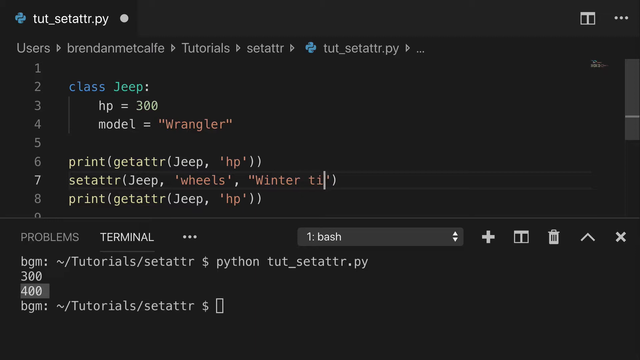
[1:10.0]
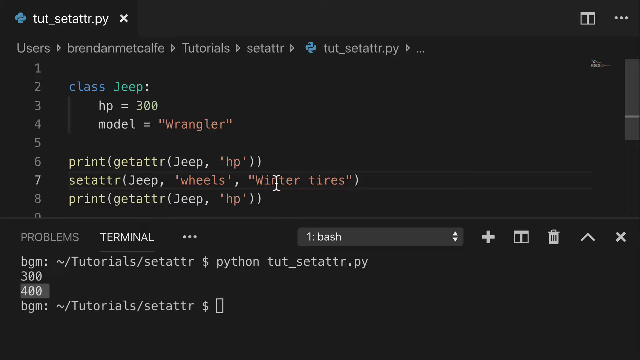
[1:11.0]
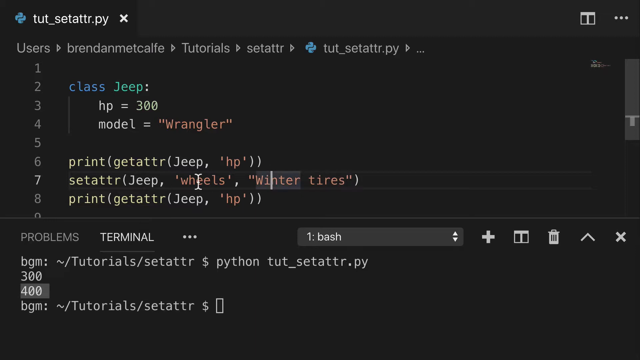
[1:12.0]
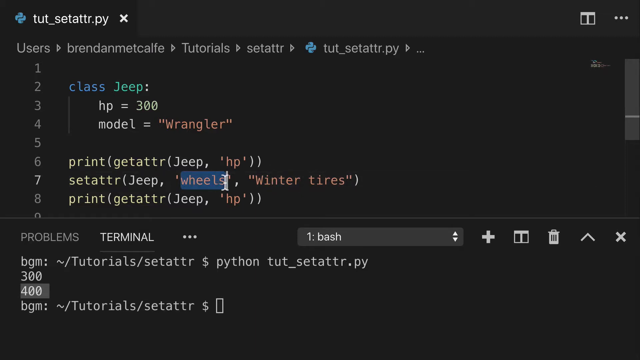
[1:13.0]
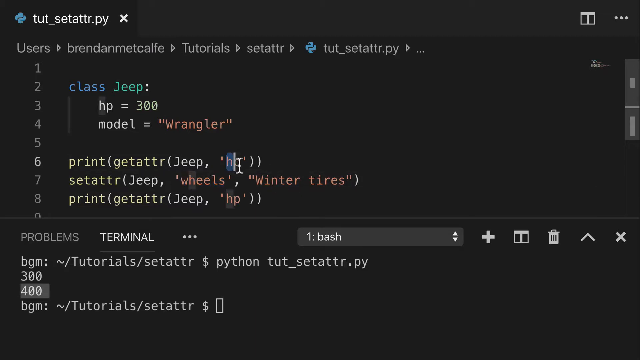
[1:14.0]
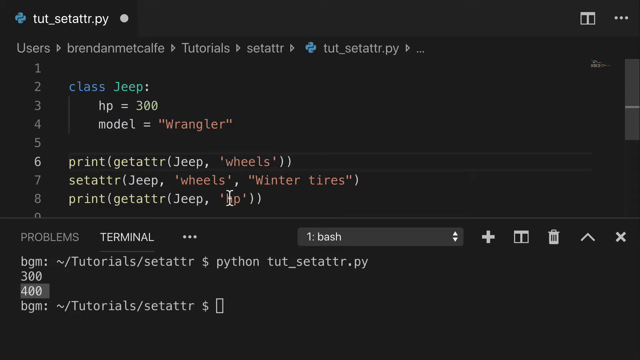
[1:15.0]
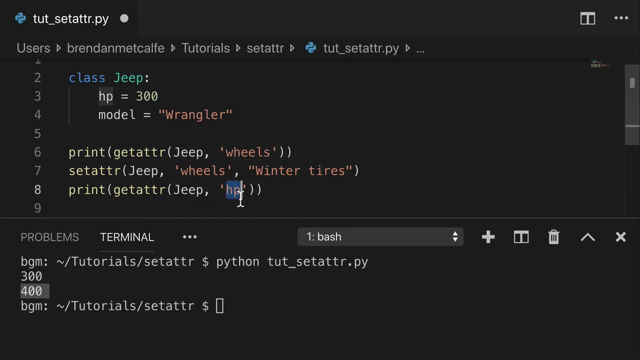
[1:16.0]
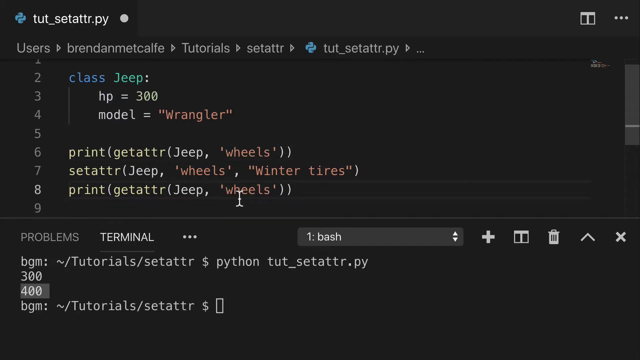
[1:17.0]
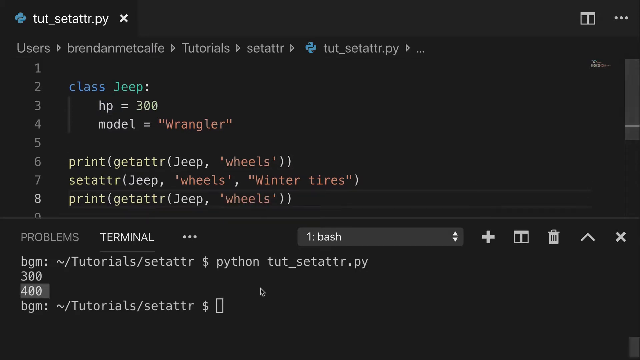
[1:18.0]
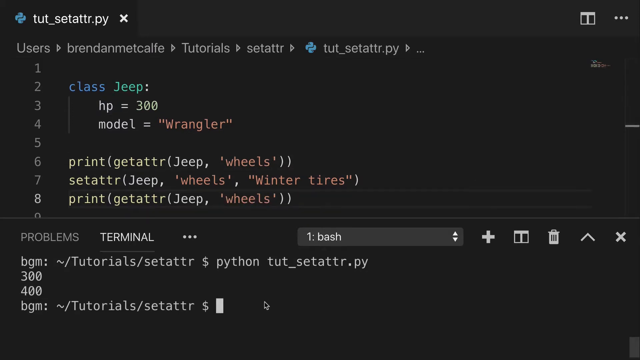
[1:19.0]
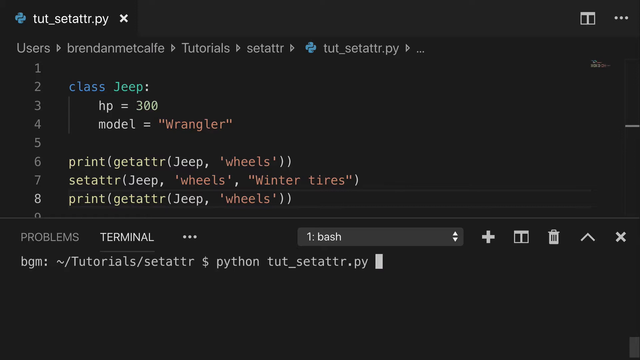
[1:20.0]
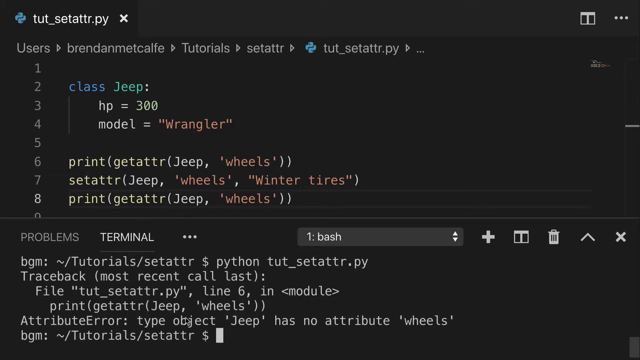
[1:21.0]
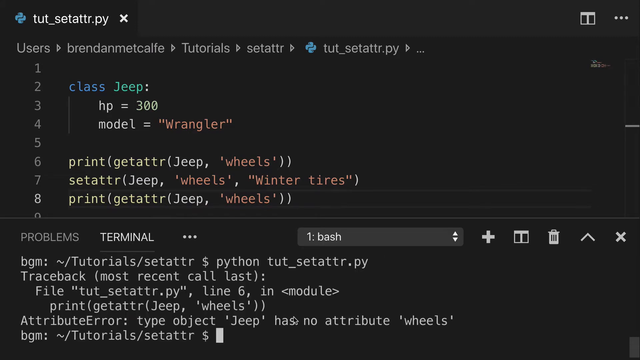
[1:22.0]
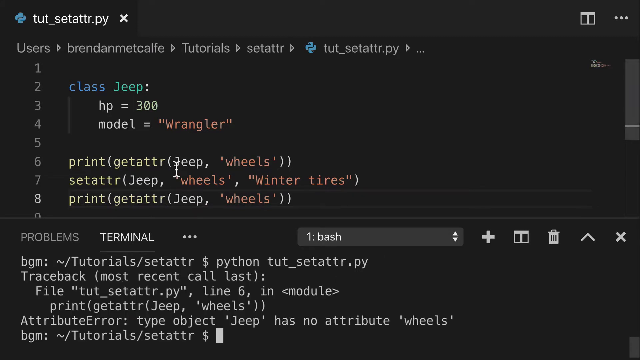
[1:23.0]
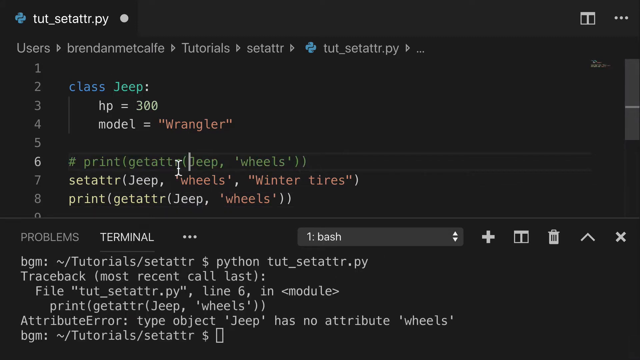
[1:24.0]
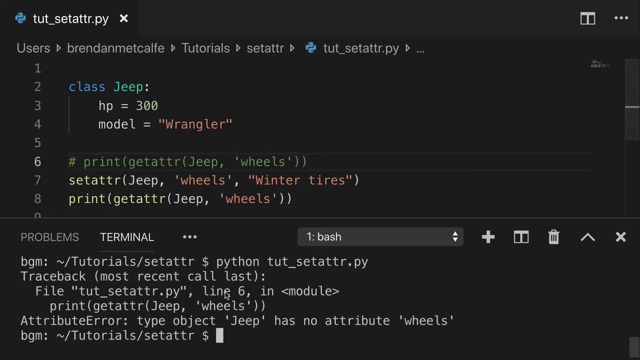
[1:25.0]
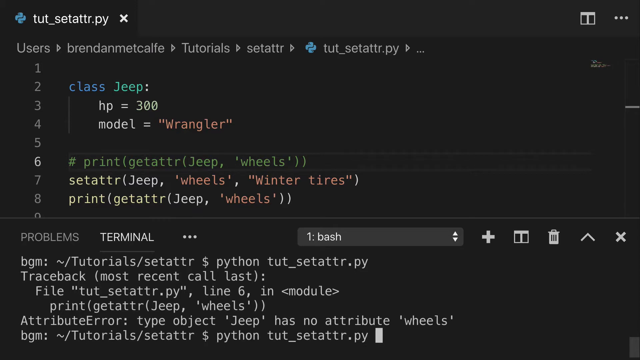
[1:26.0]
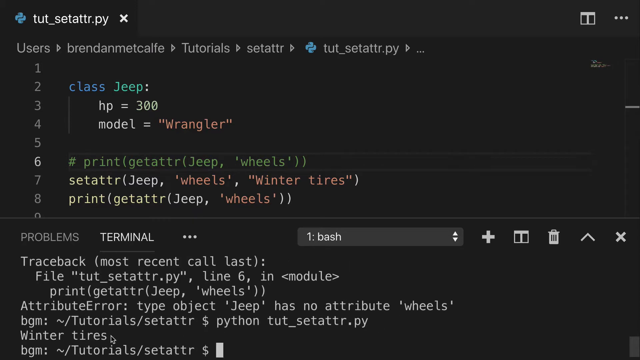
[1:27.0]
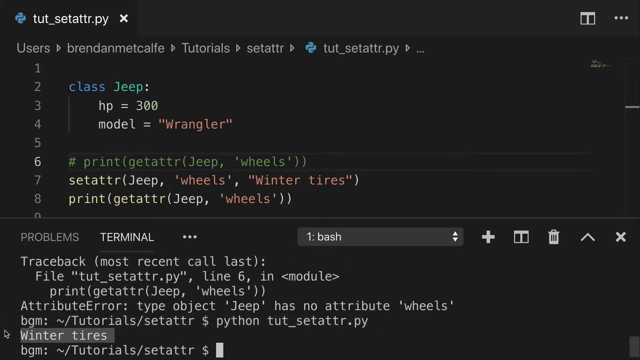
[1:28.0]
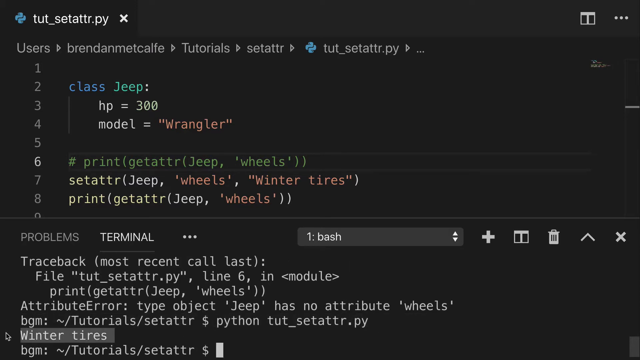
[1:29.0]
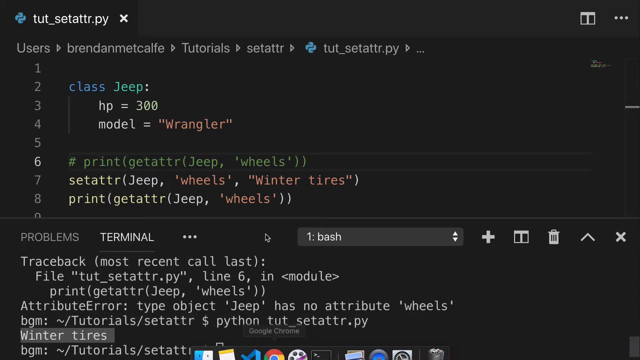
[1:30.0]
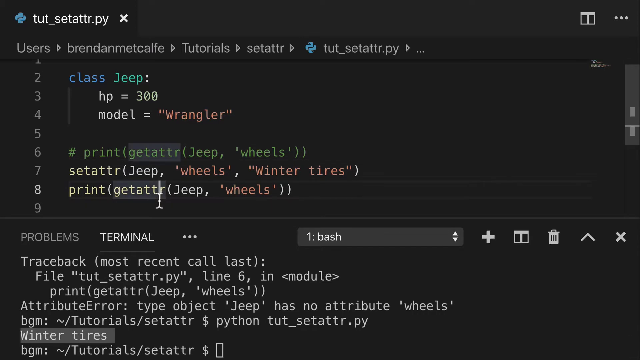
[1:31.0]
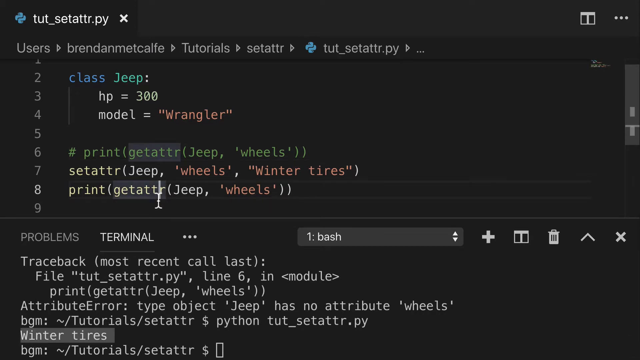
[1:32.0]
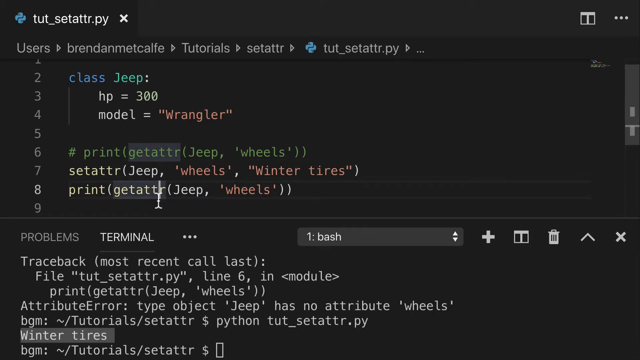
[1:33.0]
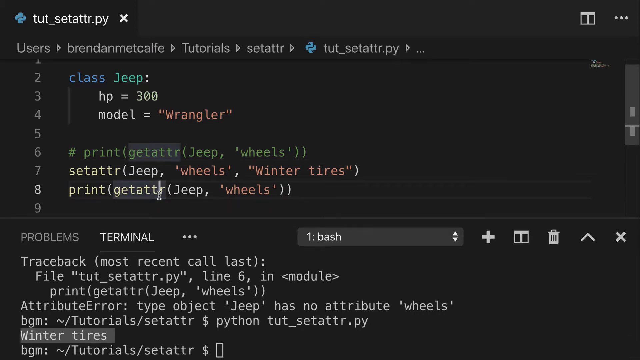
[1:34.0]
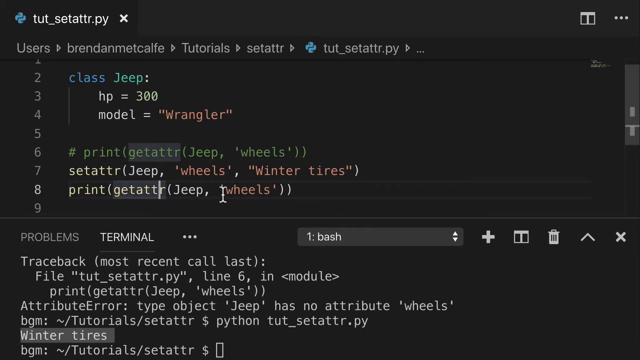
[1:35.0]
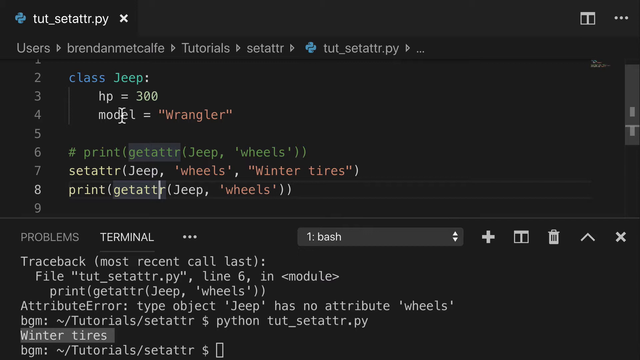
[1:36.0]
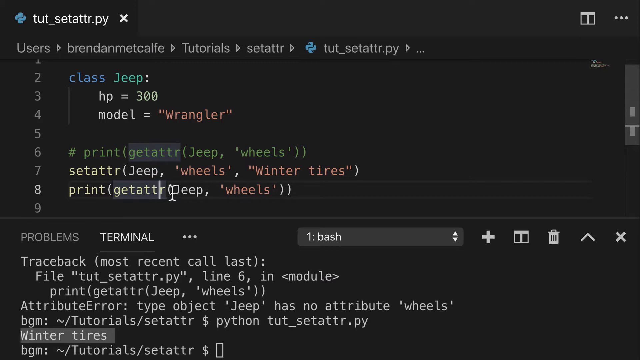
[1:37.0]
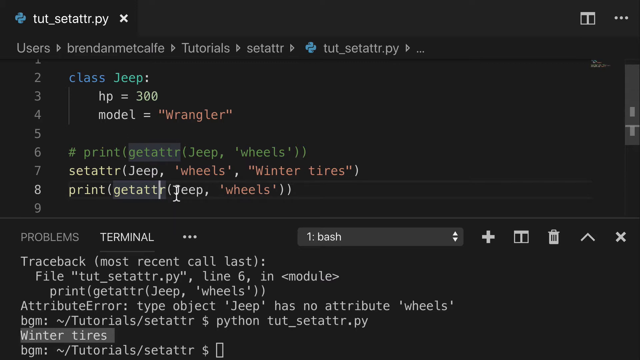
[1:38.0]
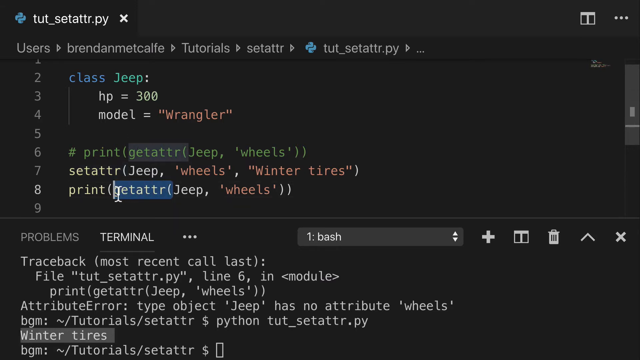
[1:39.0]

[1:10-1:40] A black screen shows at the top "Users," "Brendan Metcalf," "Tutorial," "setattr" and "toot_setattr.py." At the bottom are "Problems" and "Terminal," three dots, one item reading "Bash," and an up and down arrow; to the right of that are a plus, a bookmark, a shopping cart, an up arrow and an X. The cursor is at the top, and words there are highlighted and changed, which changes the content at the bottom of the page. Line two reads "class Jeep," line three "HP = 300," and line four "model = Wrangler," with "Wrangler" in red, "class" in blue and "Jeep" in green. Line six reads "print getattr Jeep HP," with "print" and "getattr" in yellow and "HP" in red. Next is "setattr" in yellow, followed by red text including "Wheels," "Winter" and "Tires." Underneath it reads "print getattr" in yellow and "Jeep," and "HP" is changed to "Wheels." At the bottom, "Tutorial" appears with a description.